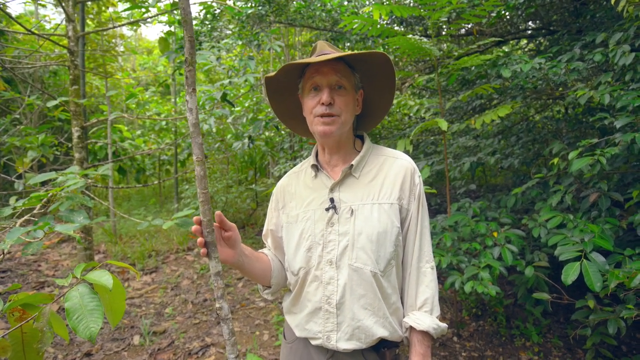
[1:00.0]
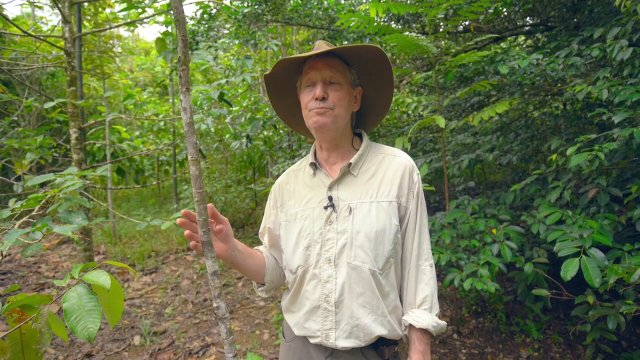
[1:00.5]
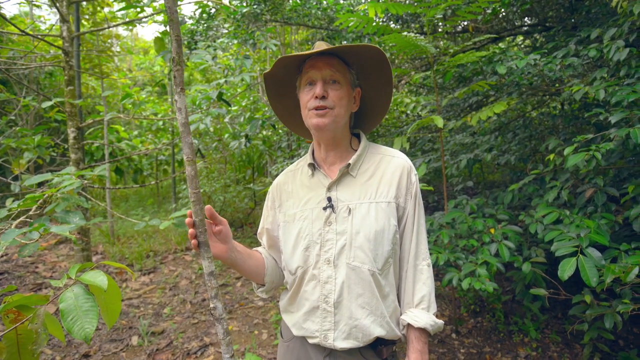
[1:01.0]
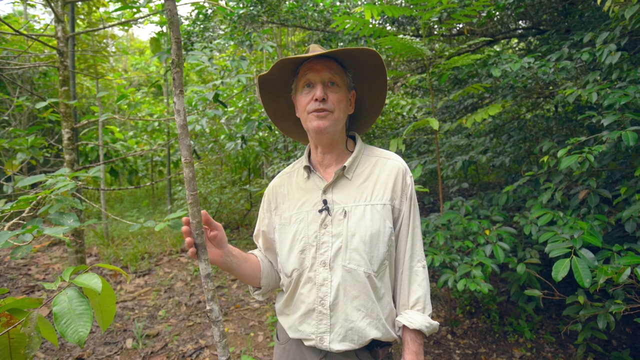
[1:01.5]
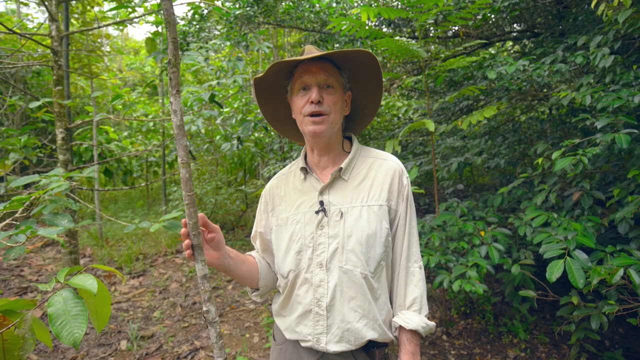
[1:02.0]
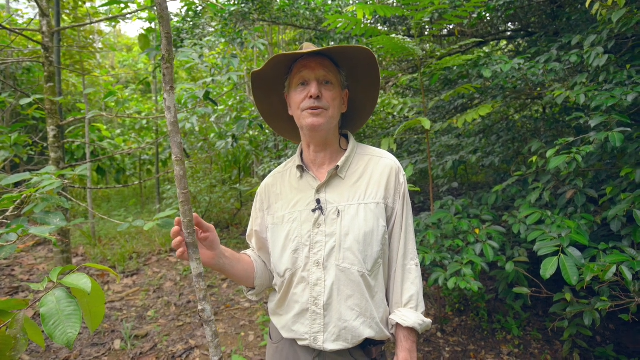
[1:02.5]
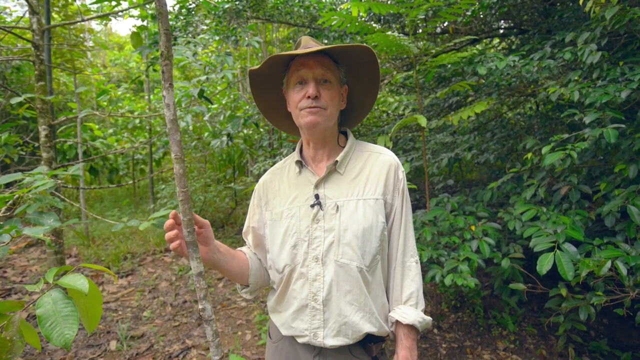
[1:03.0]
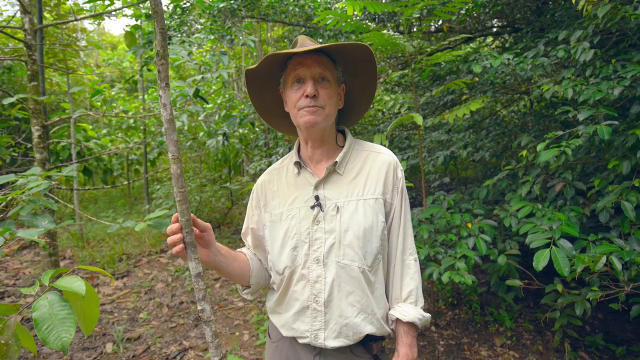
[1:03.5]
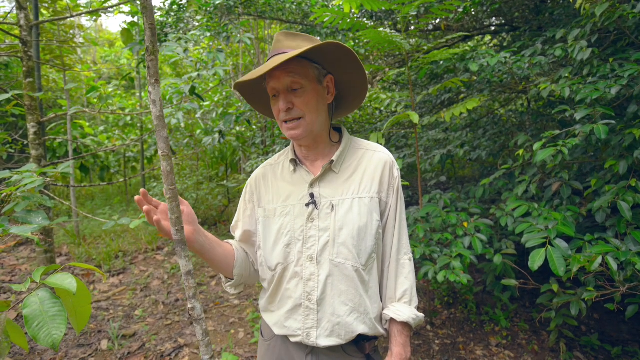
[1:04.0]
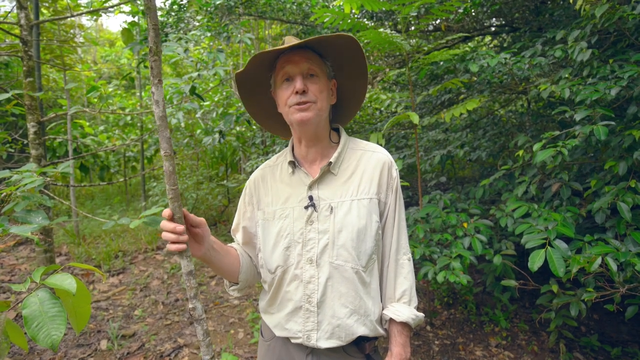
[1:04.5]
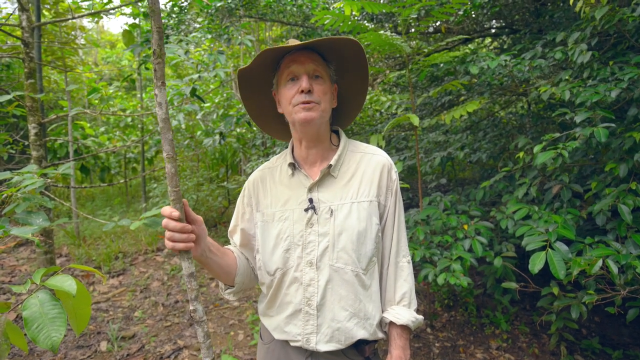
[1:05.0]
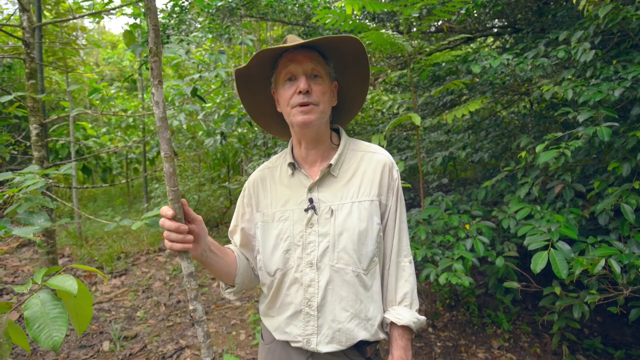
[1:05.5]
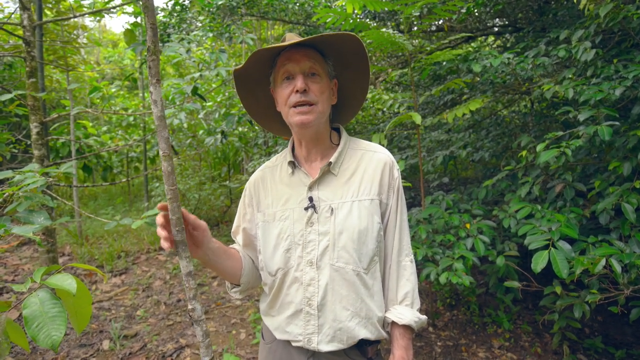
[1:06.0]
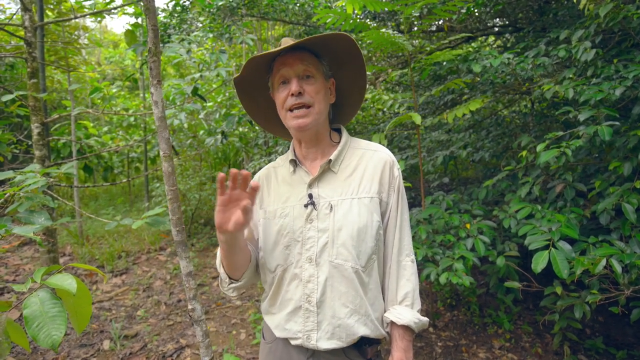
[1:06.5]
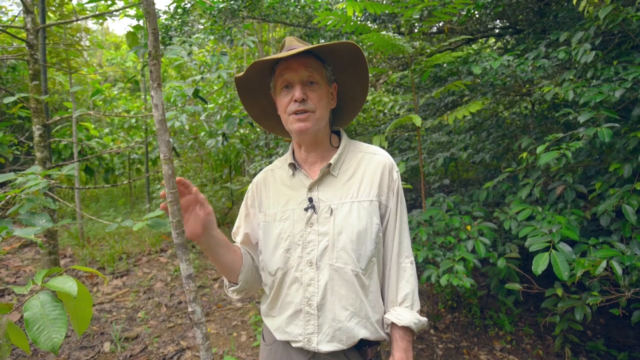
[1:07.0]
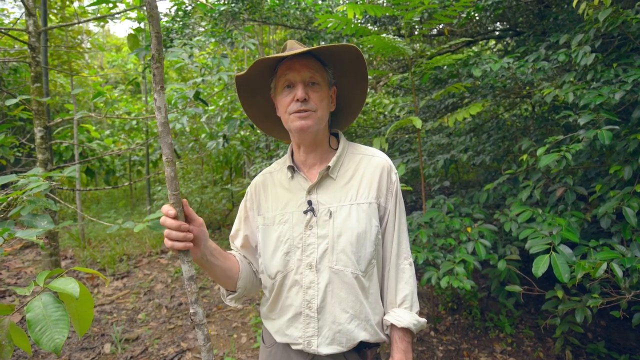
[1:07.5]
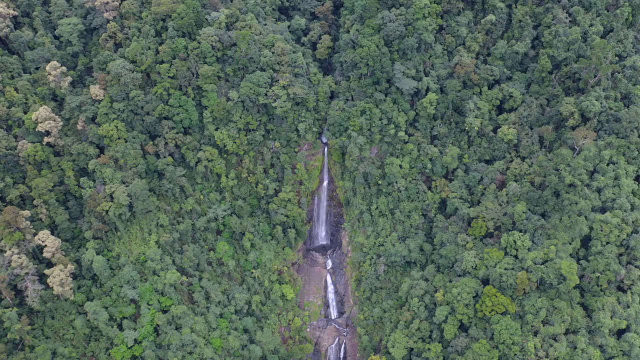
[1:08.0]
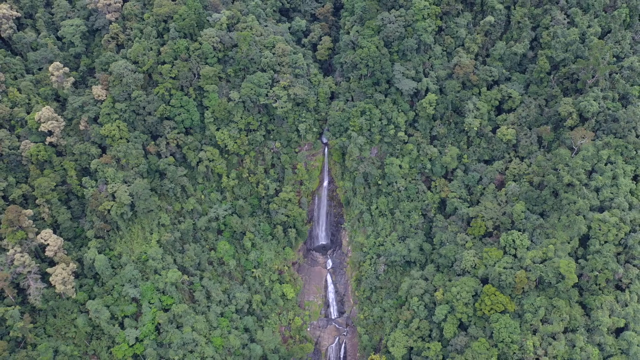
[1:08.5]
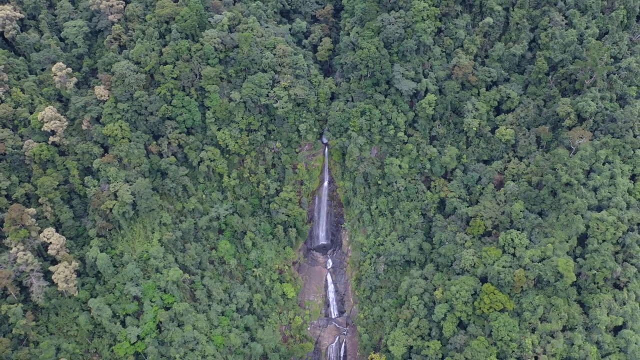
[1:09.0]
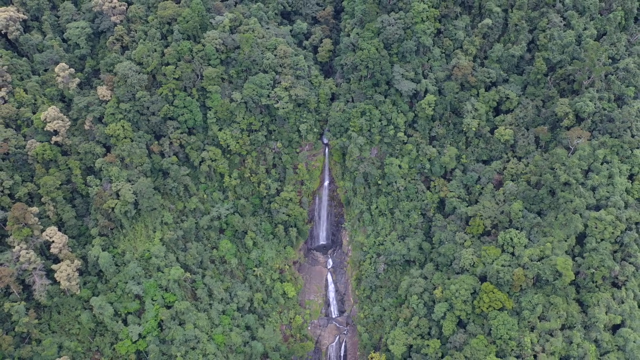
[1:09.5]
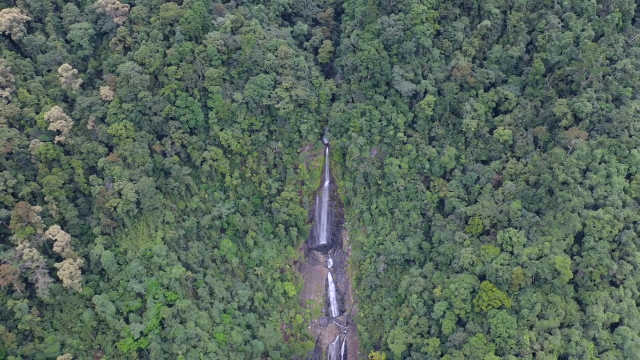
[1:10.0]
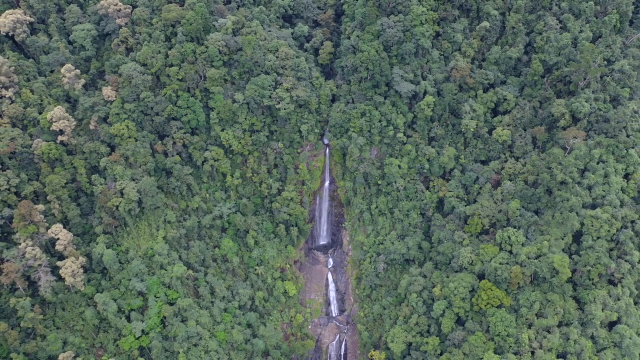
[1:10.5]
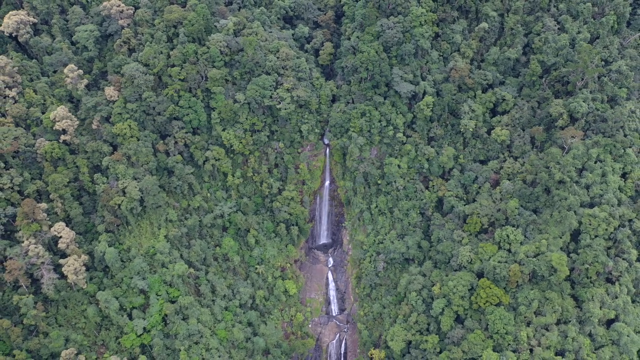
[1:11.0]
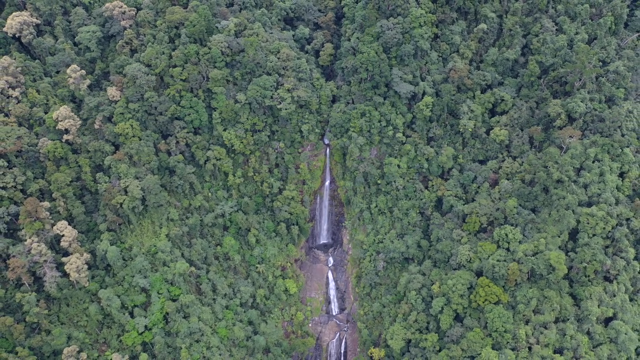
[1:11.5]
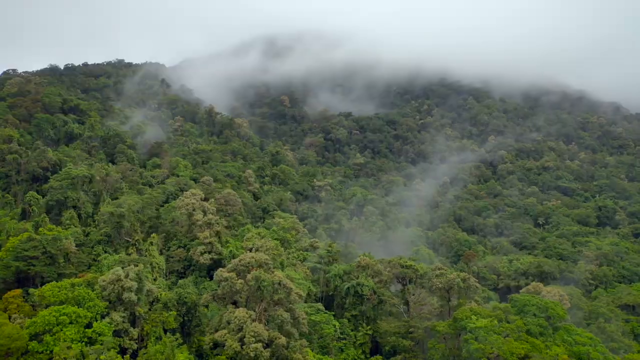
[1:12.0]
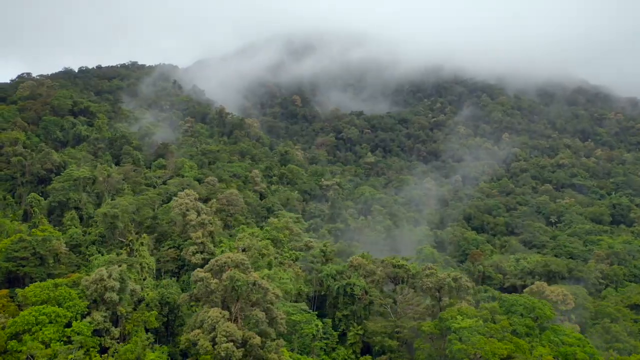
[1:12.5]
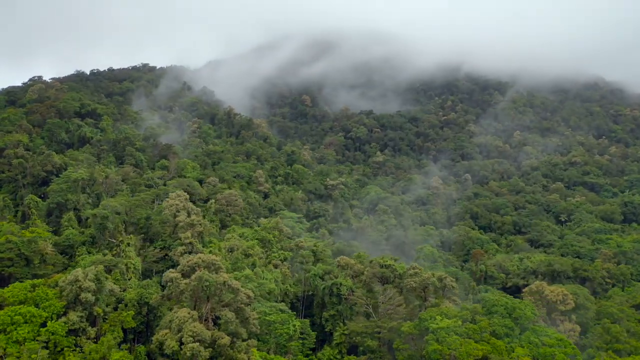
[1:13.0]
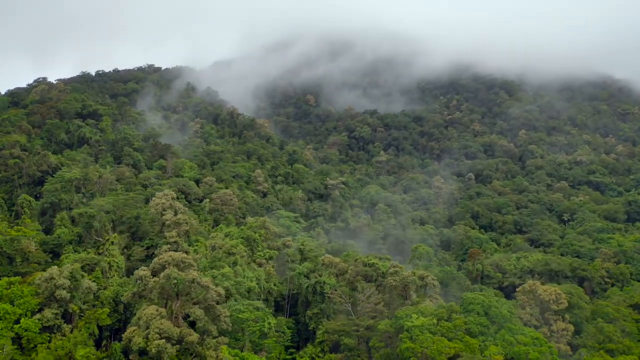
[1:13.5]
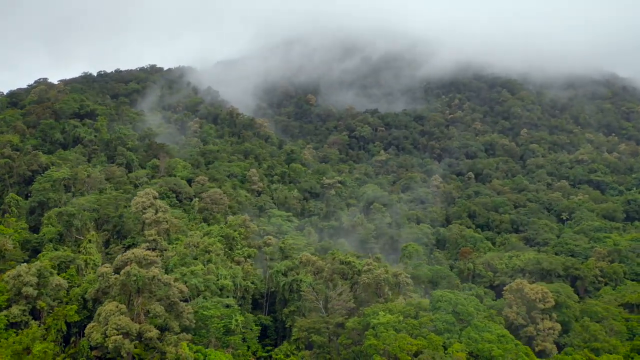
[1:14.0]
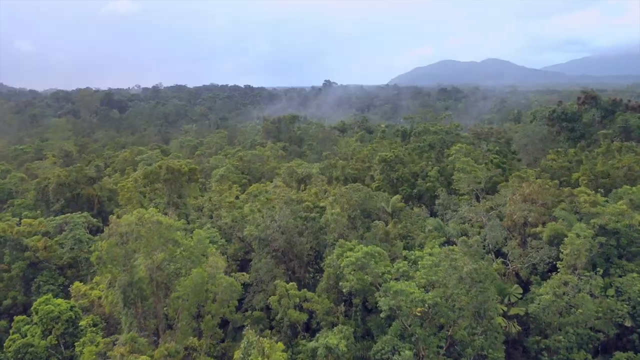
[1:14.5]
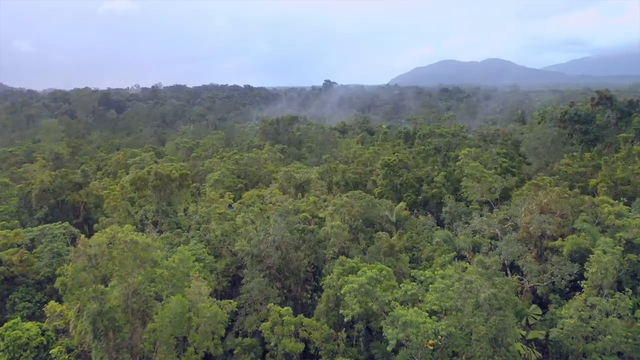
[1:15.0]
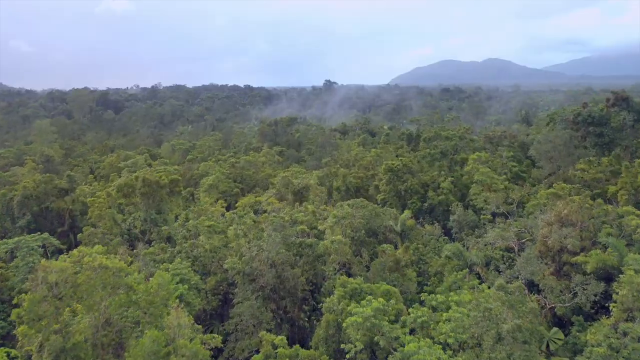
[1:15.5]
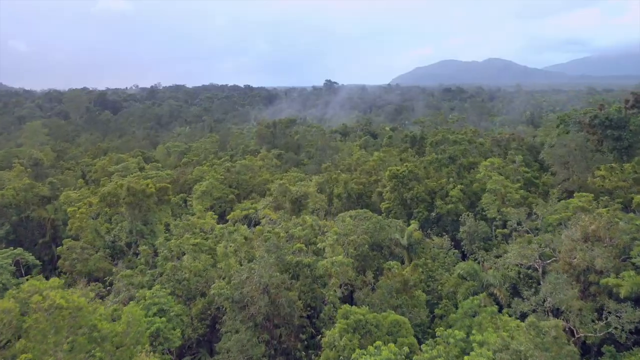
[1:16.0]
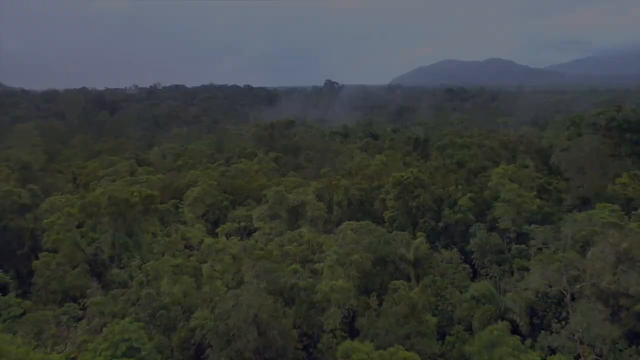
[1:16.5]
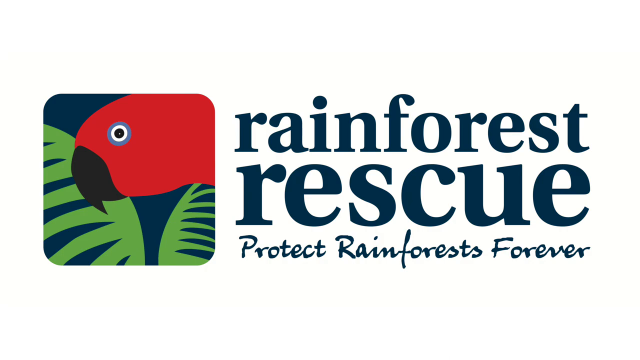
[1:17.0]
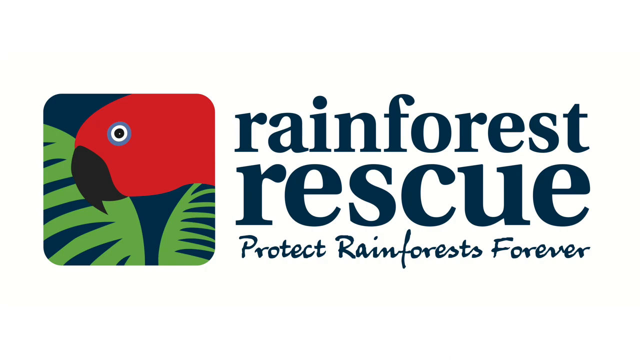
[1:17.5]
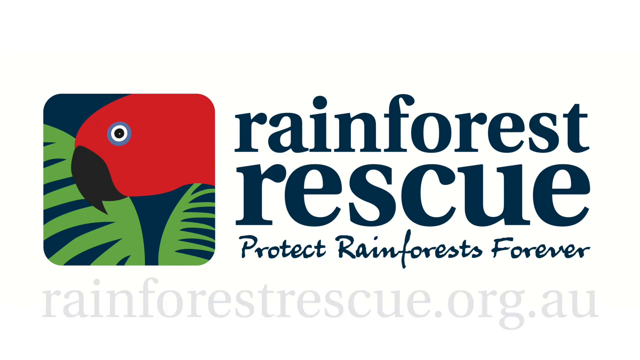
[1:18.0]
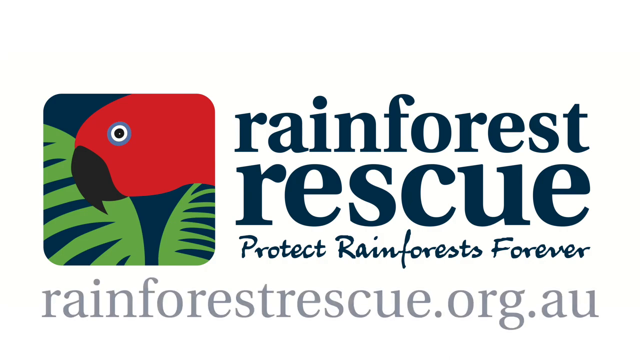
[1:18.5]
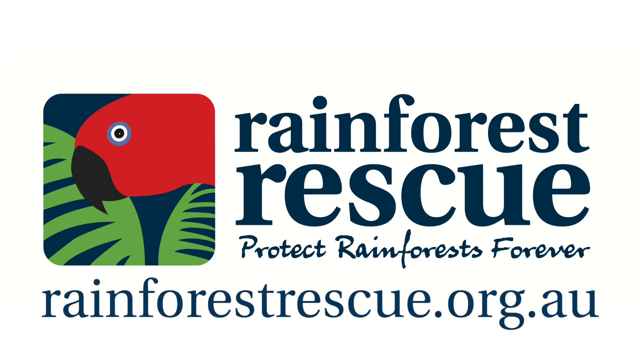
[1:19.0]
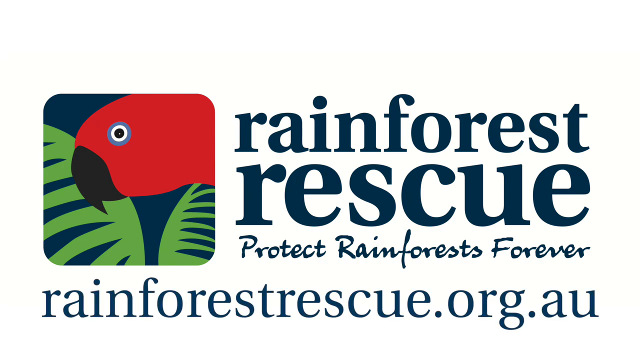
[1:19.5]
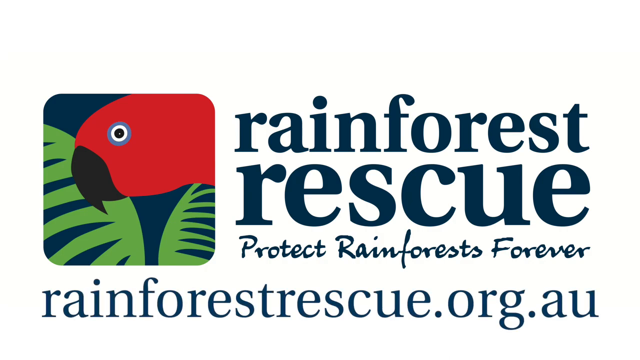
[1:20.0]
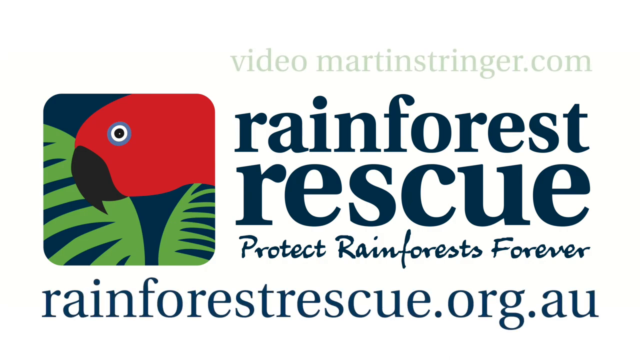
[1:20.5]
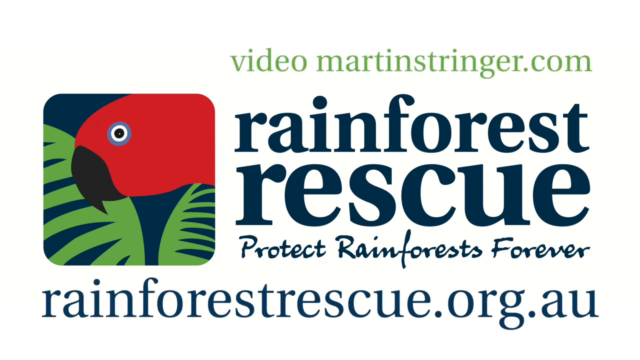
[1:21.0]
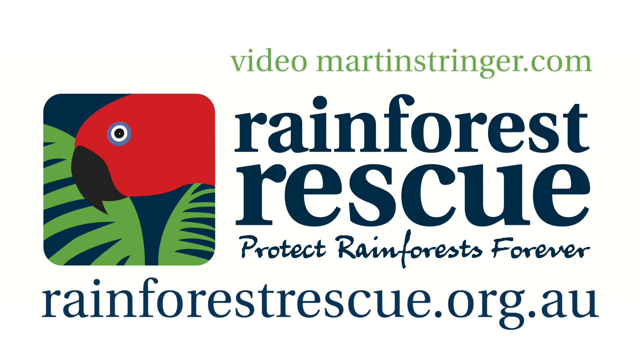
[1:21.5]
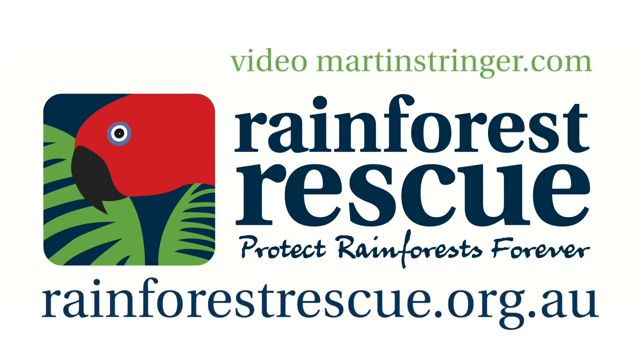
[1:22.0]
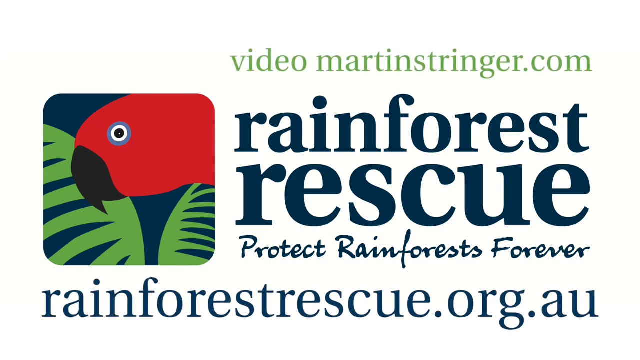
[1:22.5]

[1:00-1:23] A man stands in the middle of a forest with his right hand wrapped around a small tree that grows upward from the ground. He wears a long-sleeved light tan button-up shirt with the sleeves rolled up to his elbows, a brown cowboy hat and dark brown slacks, and he speaks into the camera. Behind him is a very full, dense jungle or forest filled with trees of different sizes and kinds with tons of leaves. The video cuts to an aerial view shooting straight down on the tops of thousands of trees, with a large waterfall running down through the trees in the middle. A drone then flies over the tops of the trees.